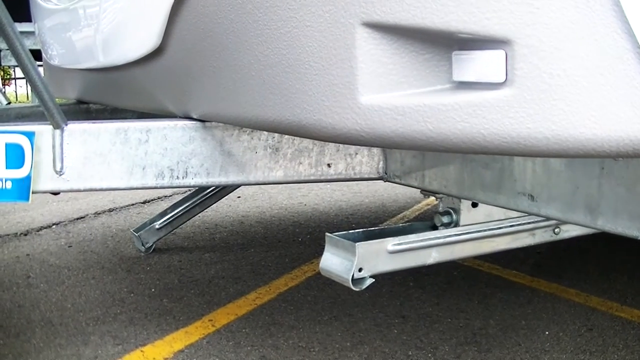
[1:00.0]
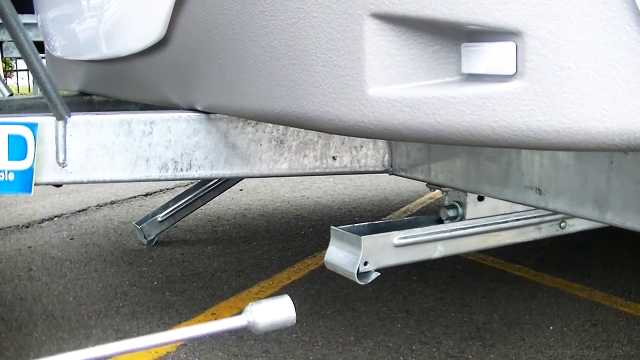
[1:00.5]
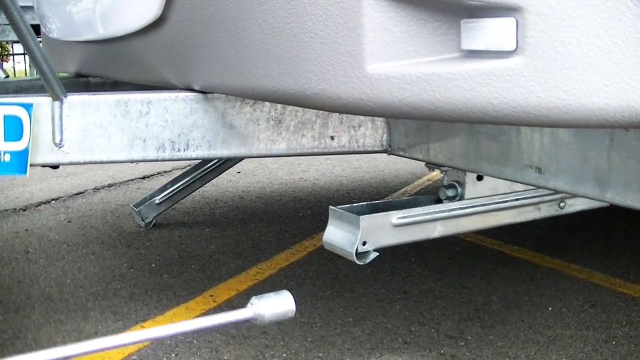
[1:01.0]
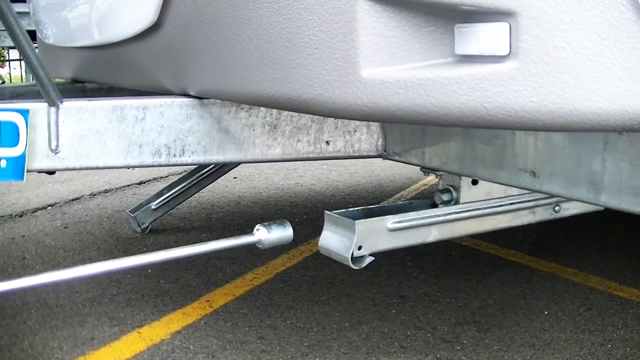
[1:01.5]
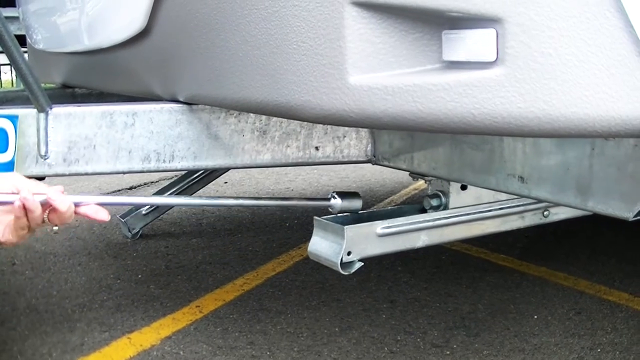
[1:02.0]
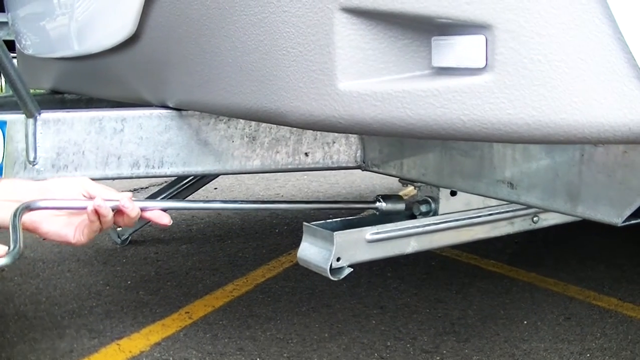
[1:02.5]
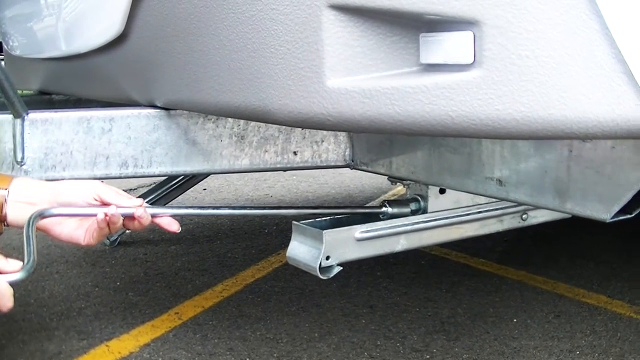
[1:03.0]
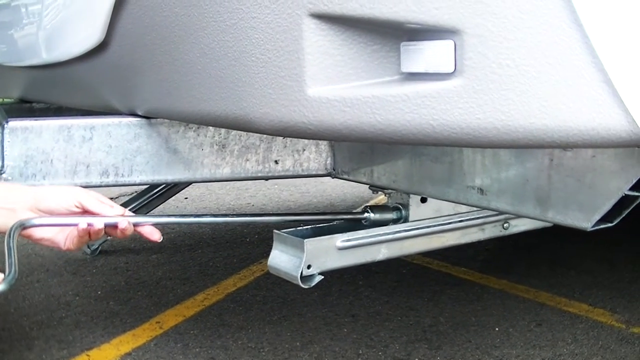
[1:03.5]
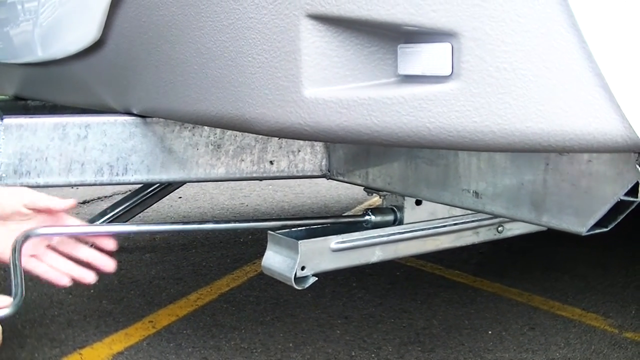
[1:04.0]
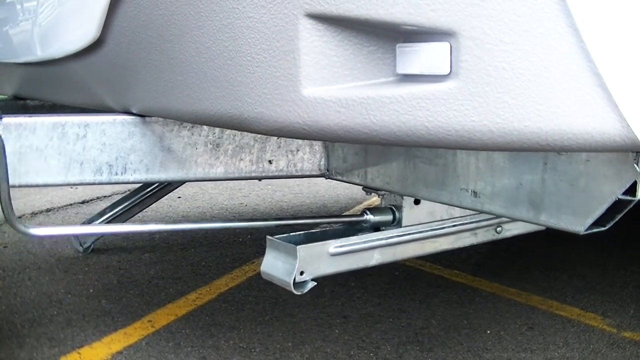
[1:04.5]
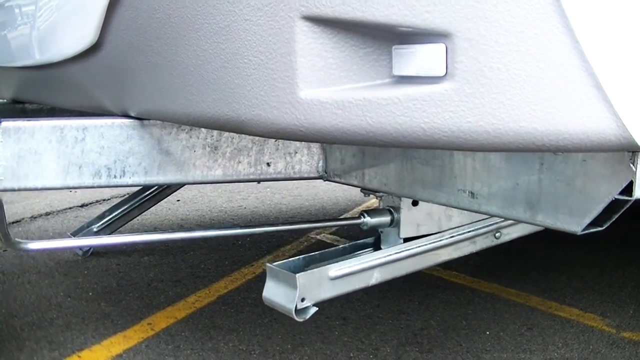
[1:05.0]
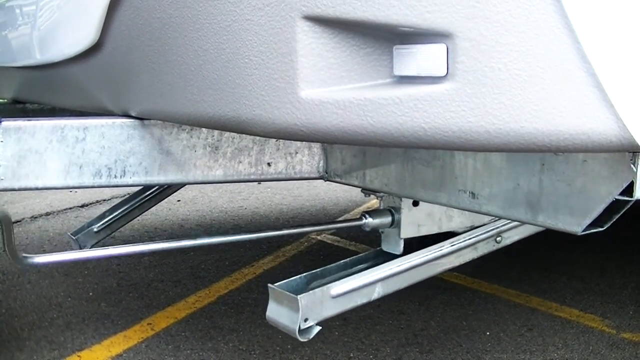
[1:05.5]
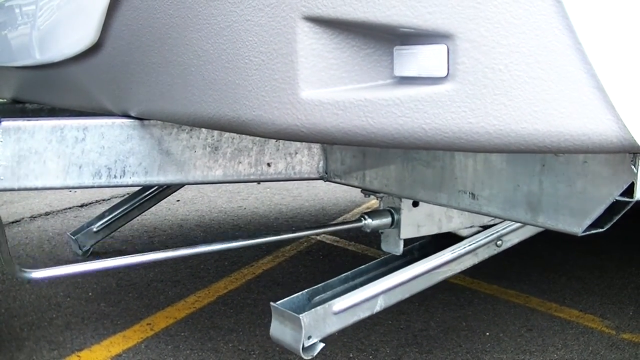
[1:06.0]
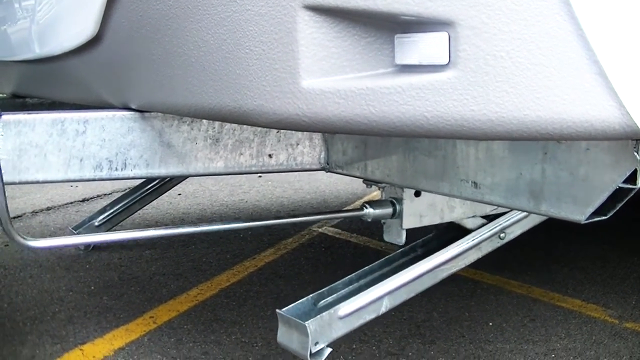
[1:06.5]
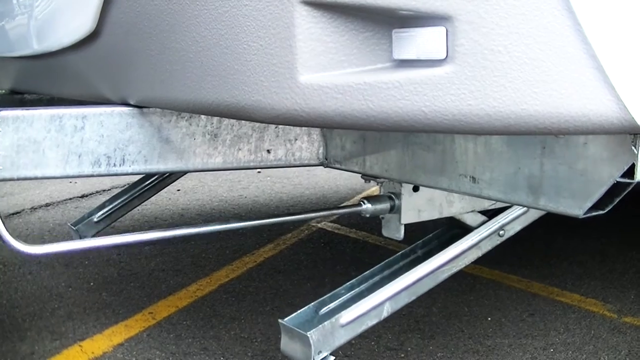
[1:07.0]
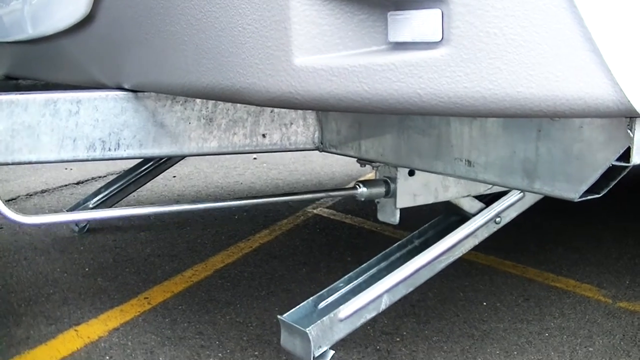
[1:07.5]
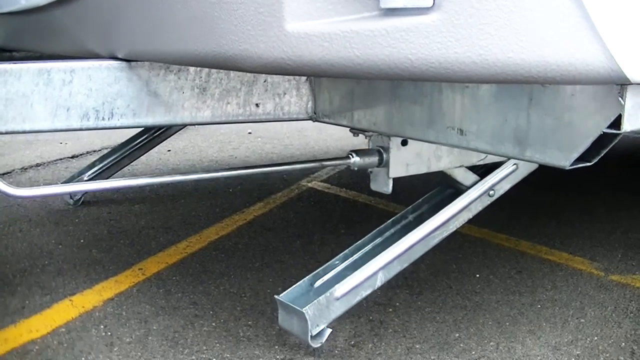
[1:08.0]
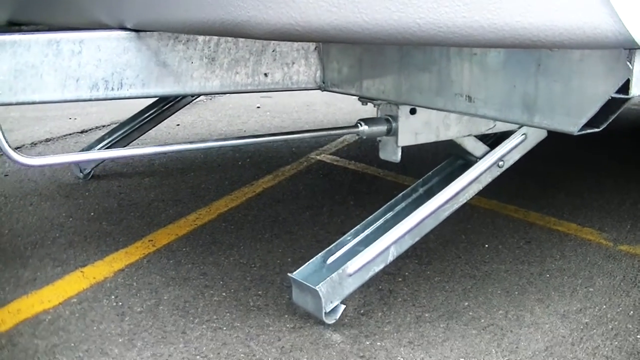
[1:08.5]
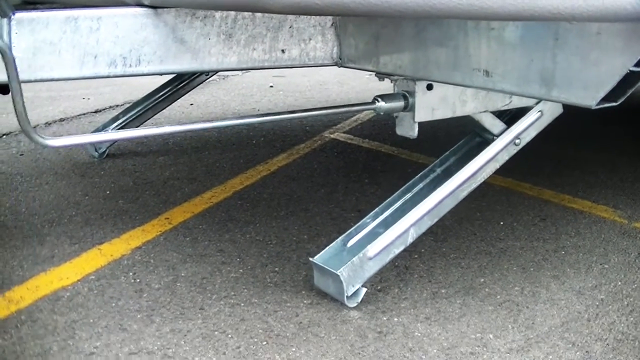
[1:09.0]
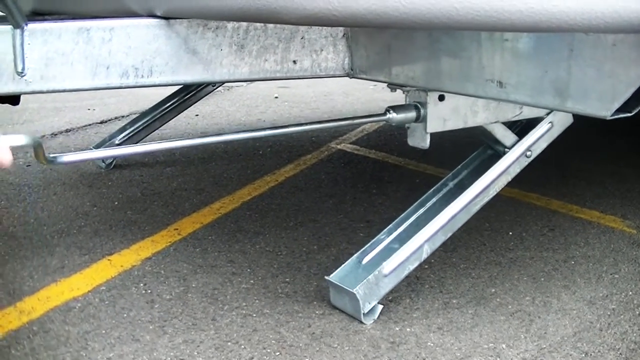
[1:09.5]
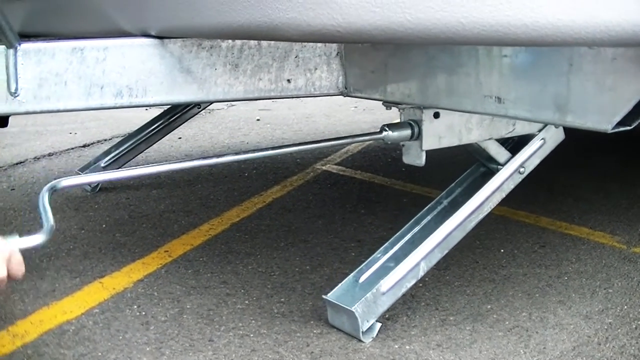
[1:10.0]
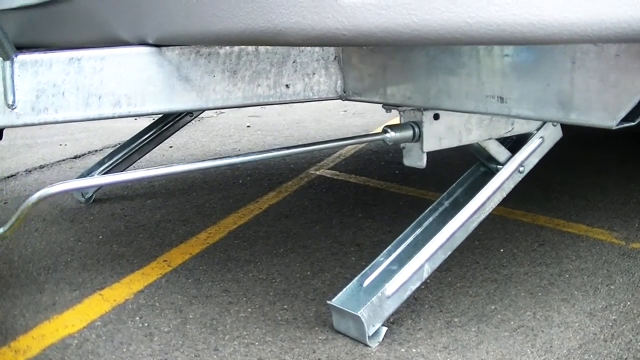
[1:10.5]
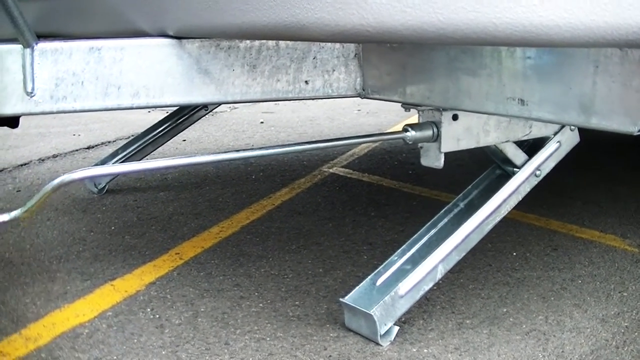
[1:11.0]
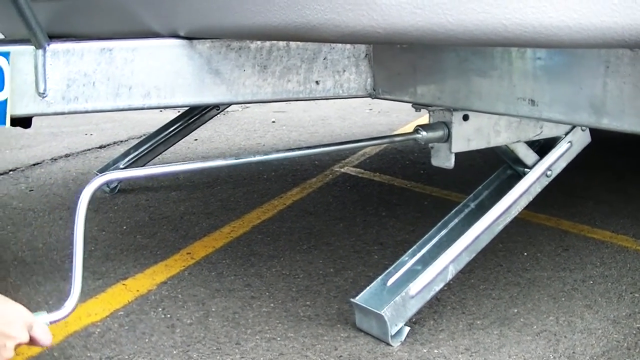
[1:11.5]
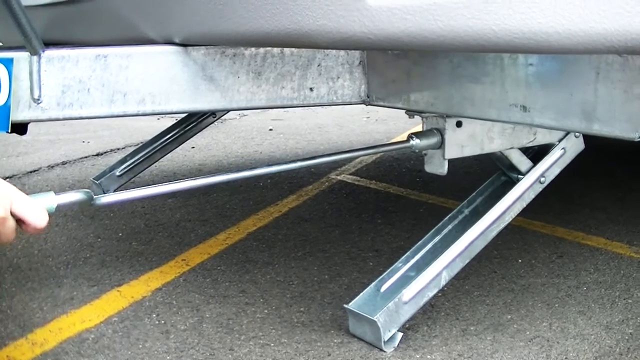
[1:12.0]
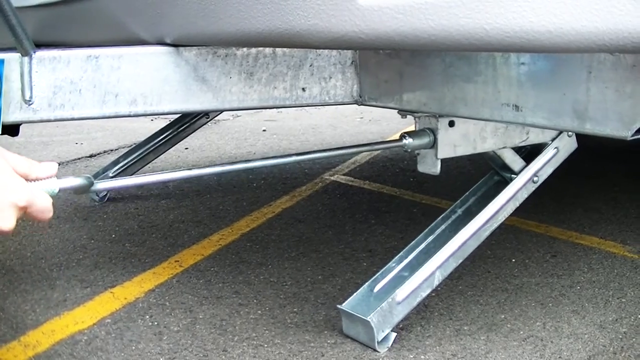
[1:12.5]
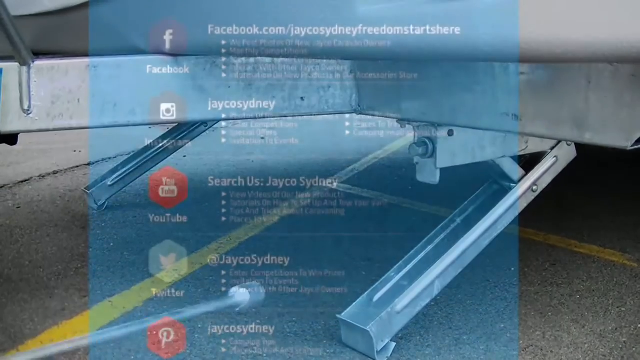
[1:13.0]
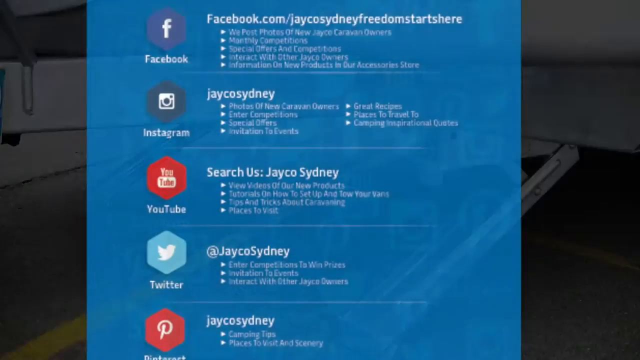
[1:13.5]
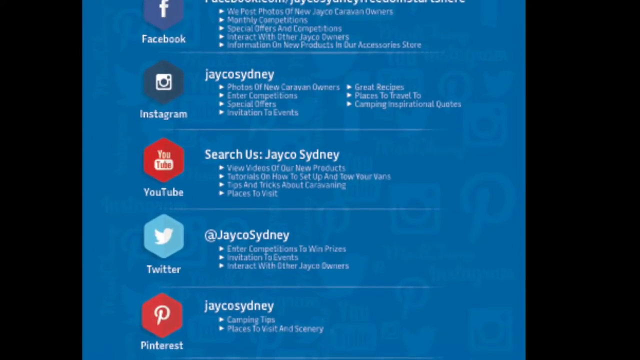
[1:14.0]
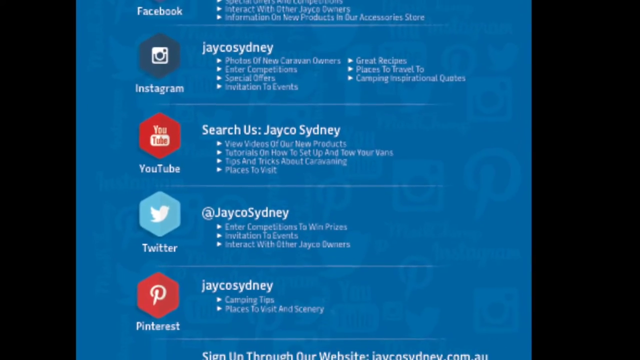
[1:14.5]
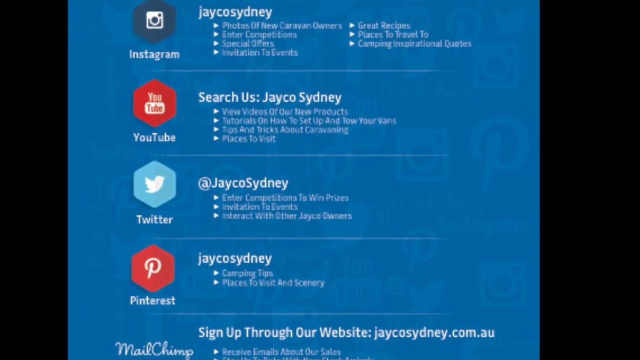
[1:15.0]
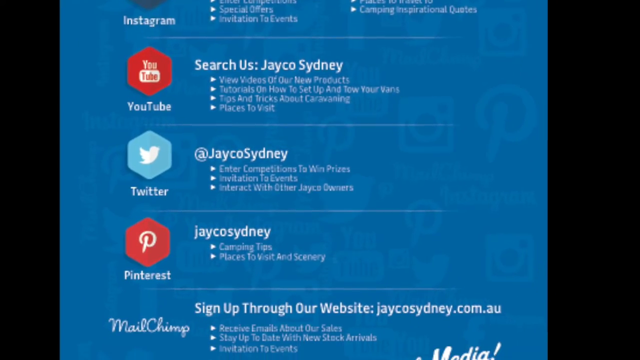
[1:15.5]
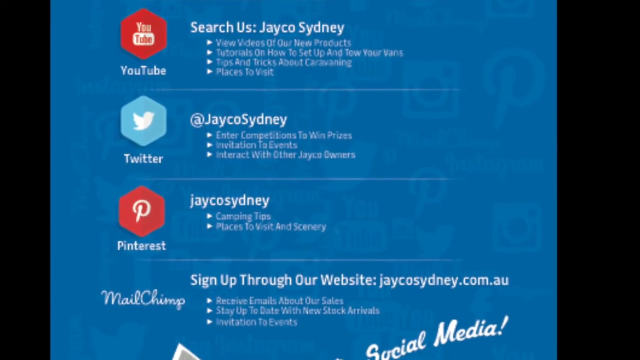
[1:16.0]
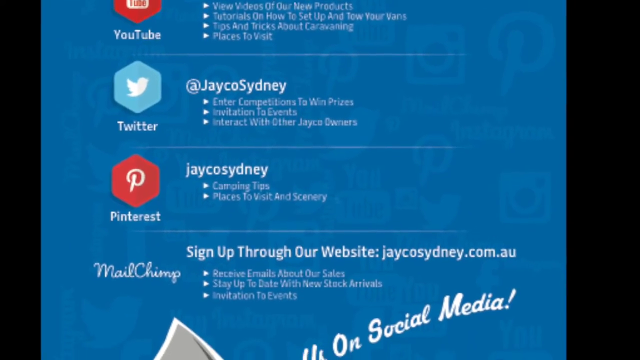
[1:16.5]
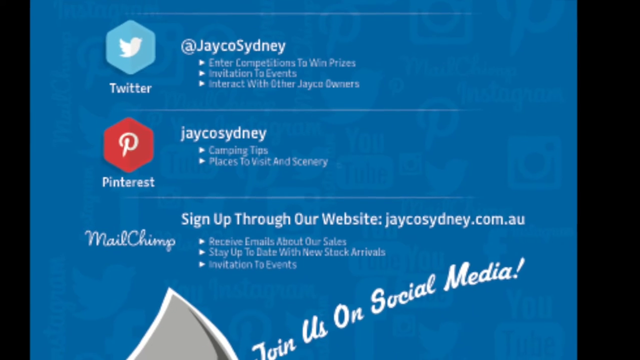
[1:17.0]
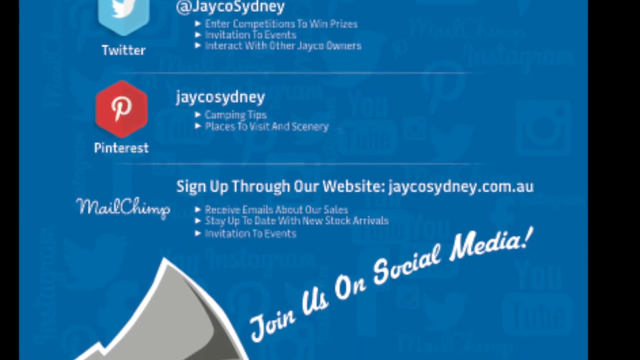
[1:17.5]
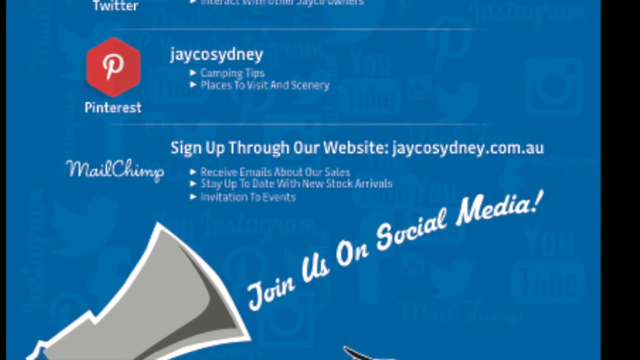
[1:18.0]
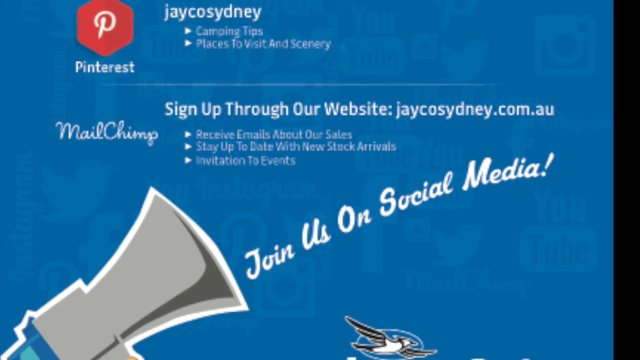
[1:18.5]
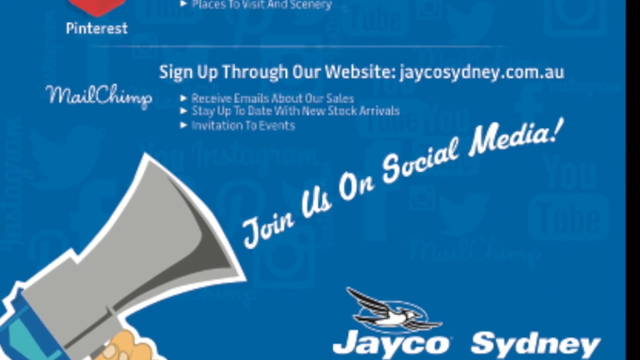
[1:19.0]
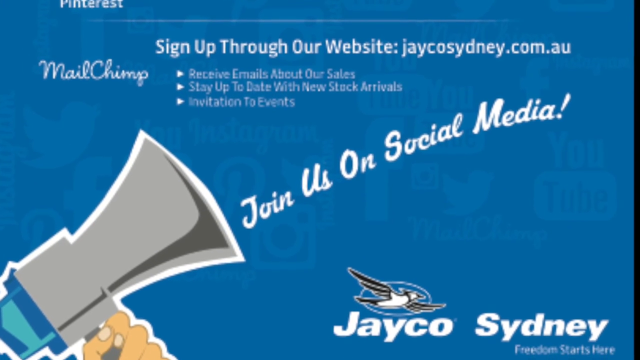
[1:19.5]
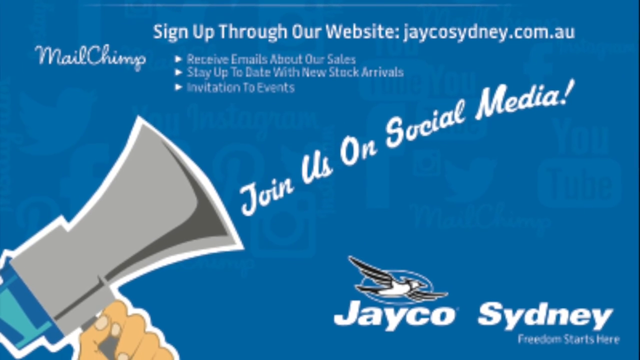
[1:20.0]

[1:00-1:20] The view is down near the trailer hitch, which barely goes off the left side, with a little of the trailer visible above it. Just under the hitch, coming in from the left side, one of the legs angles down to the left, and another is barely in from the right side, going across to the center. These are long, silver, rectangular legs. A big, long silver wrench comes in and fits onto the nut just above the leg that is up parallel. It starts cranking counterclockwise, lowering the leg until it is sitting on the ground at a diagonal, just like the other one. Yellow lines are visible under this as well. Then they loosen the wrench off the nut. Next comes a blue background with a black and white border on each side, showing social media links, with names, handles and some information to the right. Going top to bottom are Facebook, Instagram, YouTube, Twitter and Pinterest, then one called MailChimp. Below that, what looks like a silver megaphone comes in from the left side, and coming out of it on the right side white text says "join us on social media." Below that is what looks like a black and white bird logo, and below it bold white letters say "Jayco Sydney."